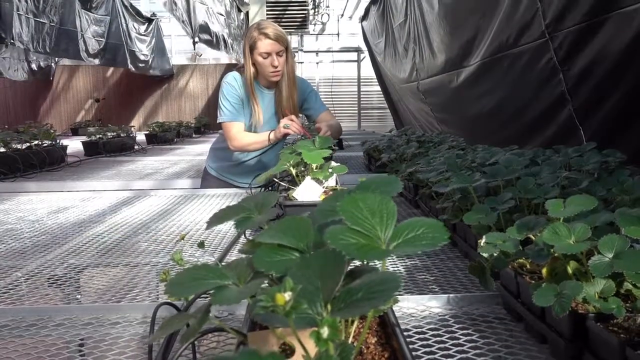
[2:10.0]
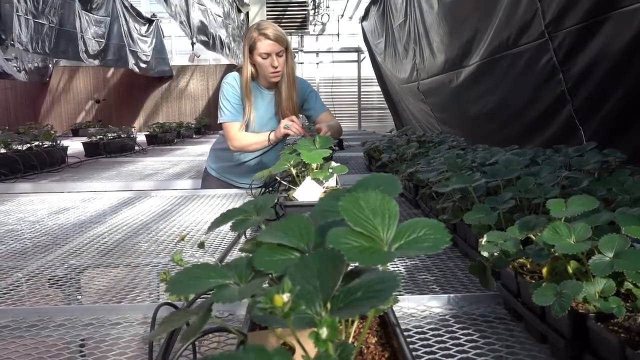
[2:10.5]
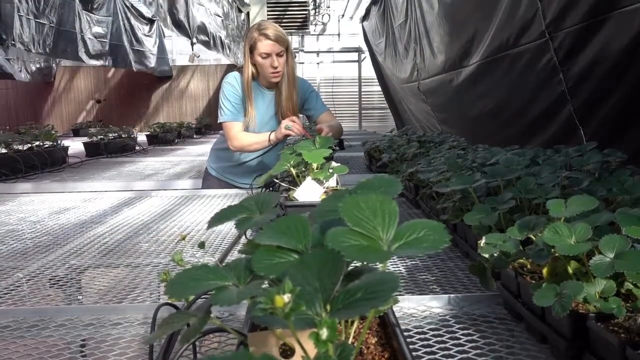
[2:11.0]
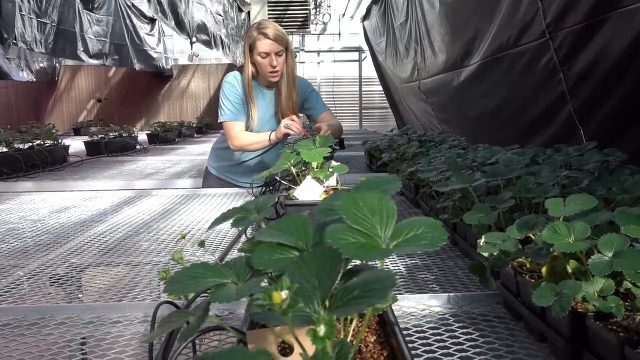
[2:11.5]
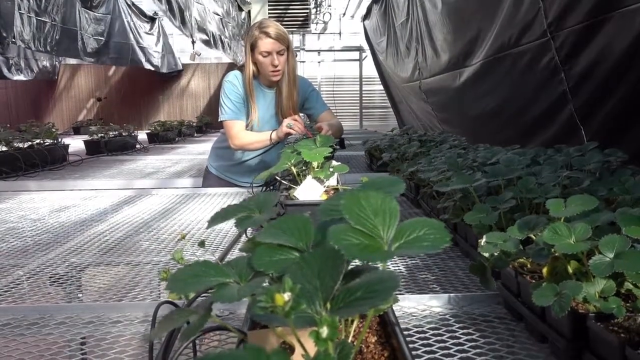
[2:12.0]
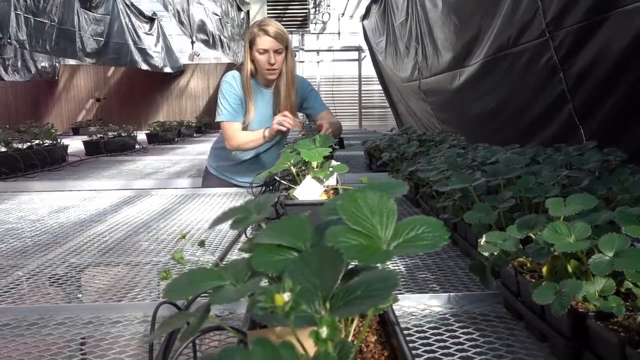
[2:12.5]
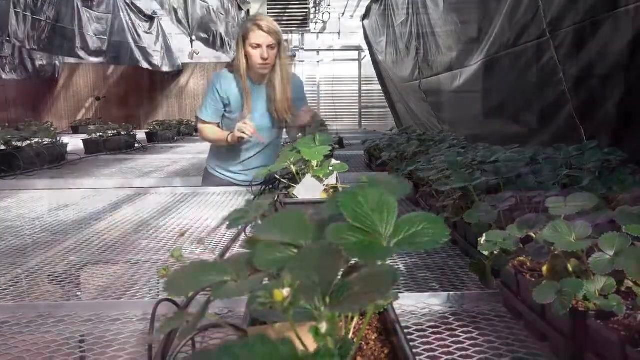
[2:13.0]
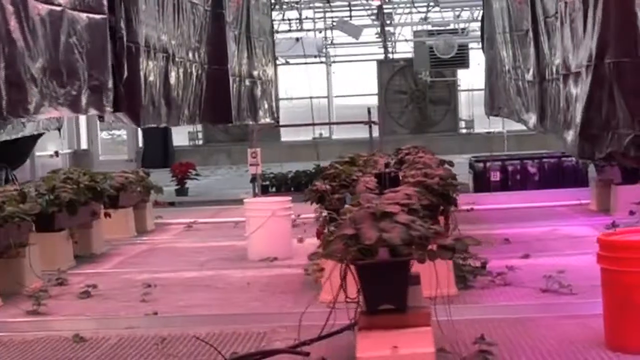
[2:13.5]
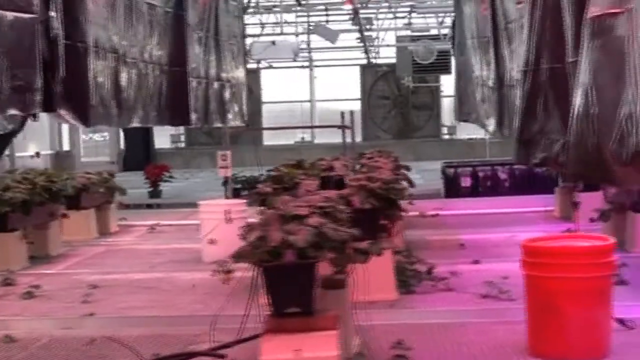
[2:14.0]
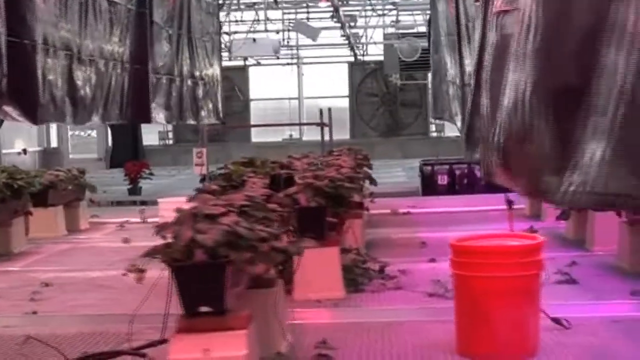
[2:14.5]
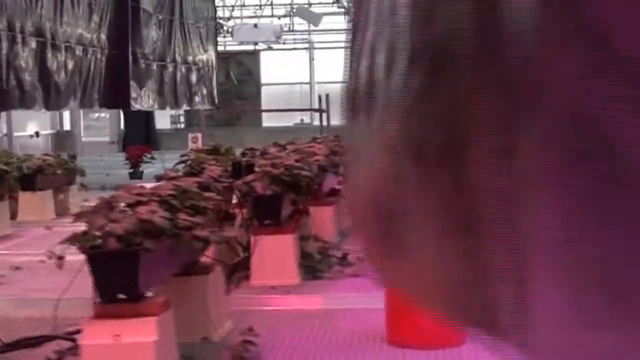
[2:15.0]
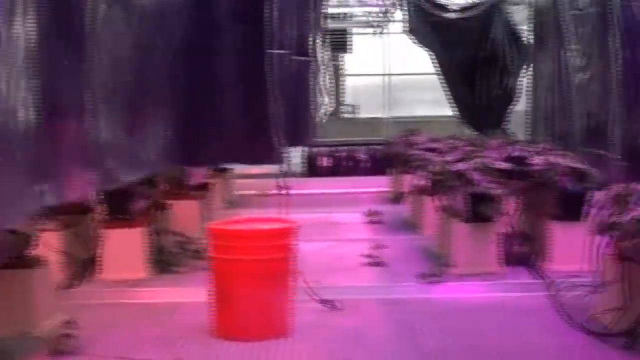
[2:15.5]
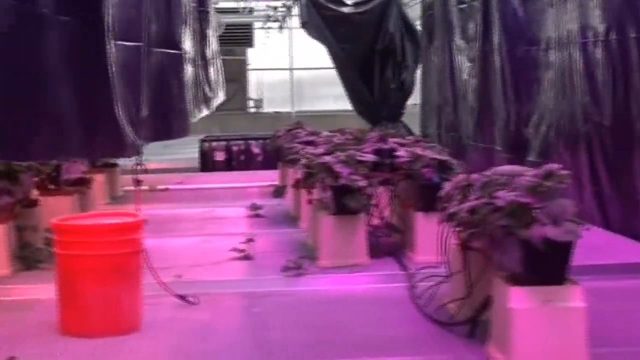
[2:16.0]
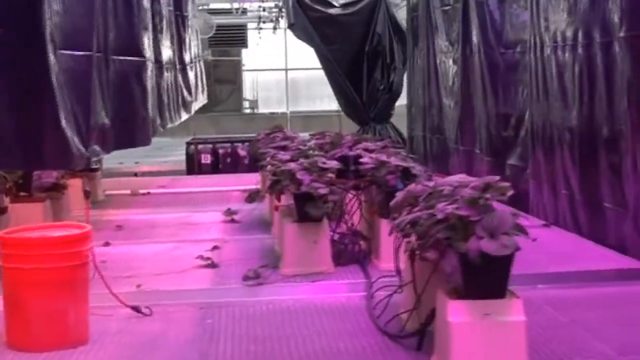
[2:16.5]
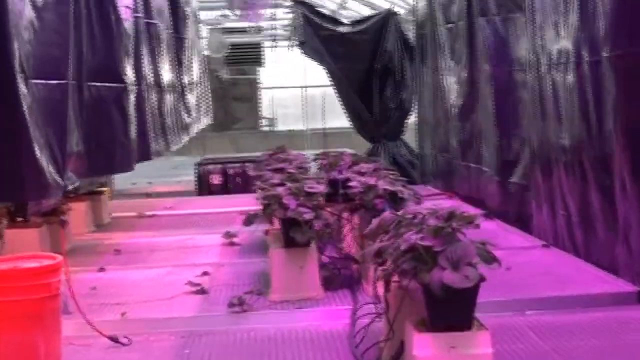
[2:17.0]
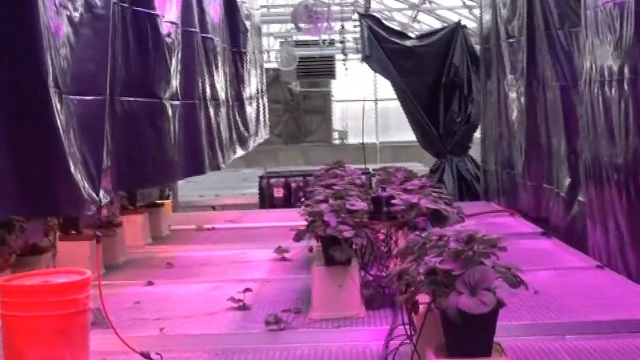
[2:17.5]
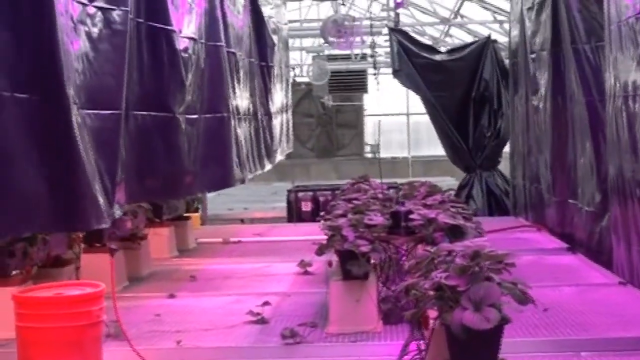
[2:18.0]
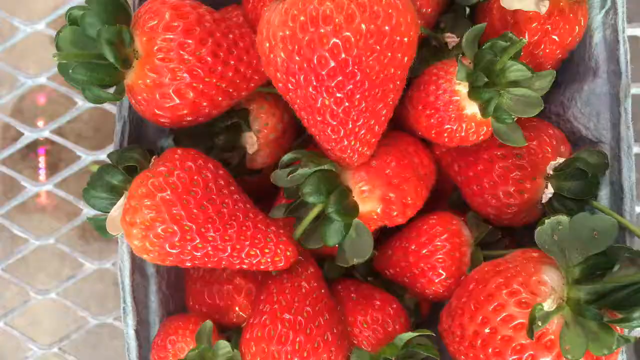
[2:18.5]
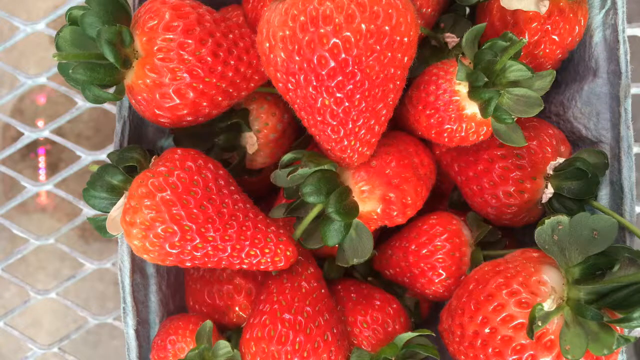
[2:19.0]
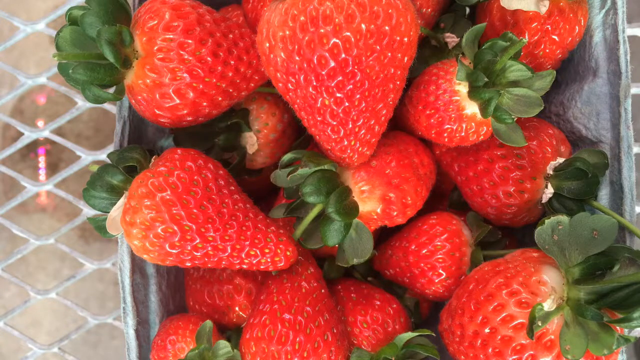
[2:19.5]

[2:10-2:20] The woman uses a paintbrush to brush the plant in the planter box, then takes the paintbrush off. The scene changes to the inside of the large greenhouse, where planter boxes are elevated above the ground and black plastic sheets hanging from the ceiling separate the planter boxes. In the distance are very large dark gray fans that look like box fans. Then an overhead view shows ripe red strawberries in a light gray cart.